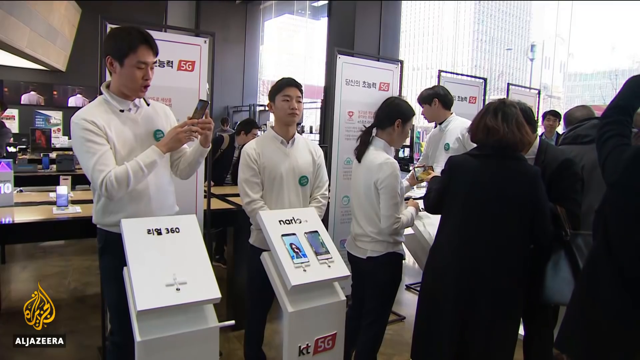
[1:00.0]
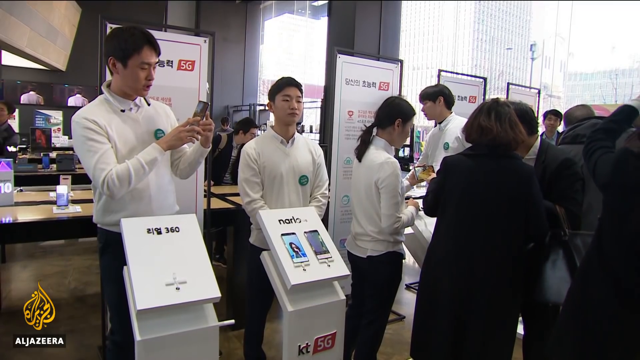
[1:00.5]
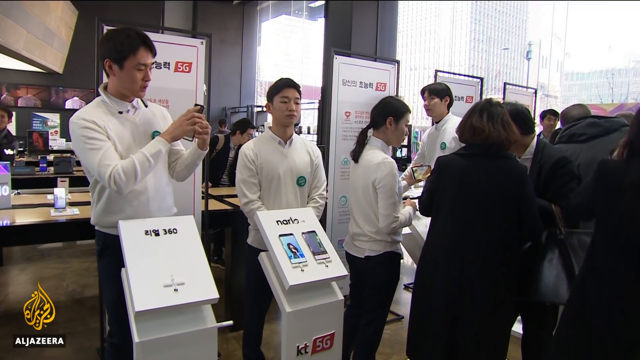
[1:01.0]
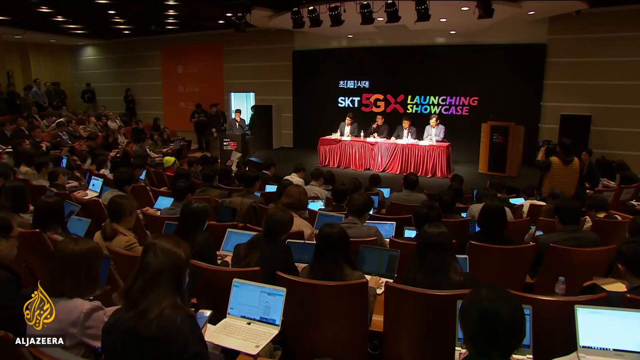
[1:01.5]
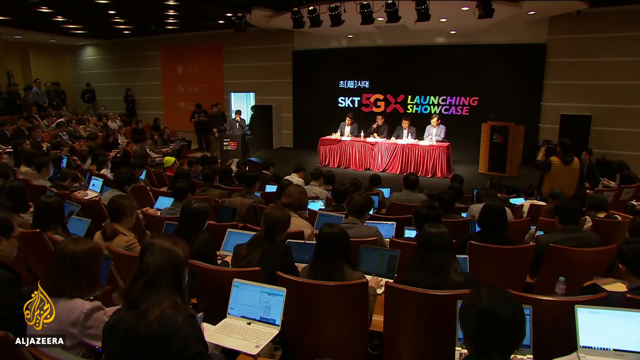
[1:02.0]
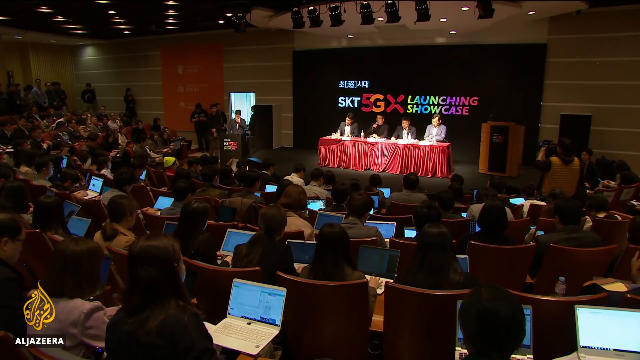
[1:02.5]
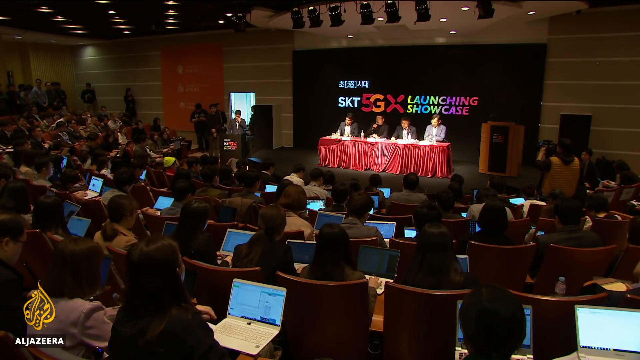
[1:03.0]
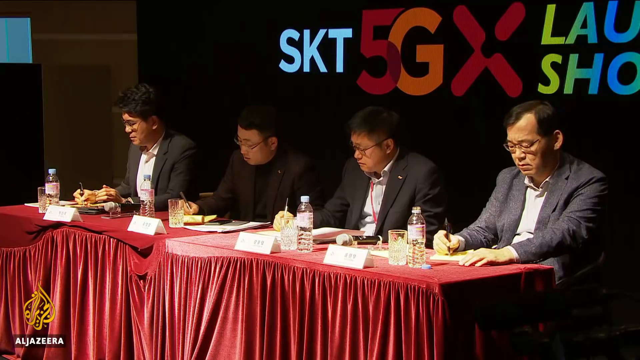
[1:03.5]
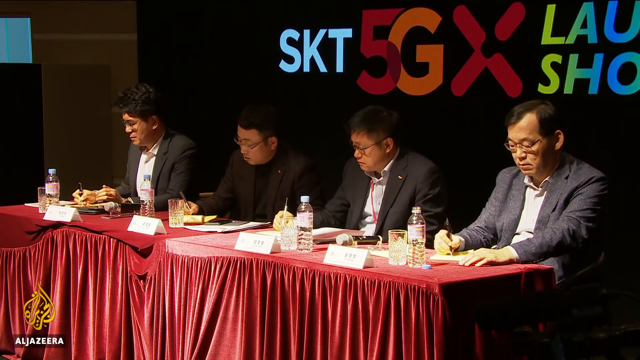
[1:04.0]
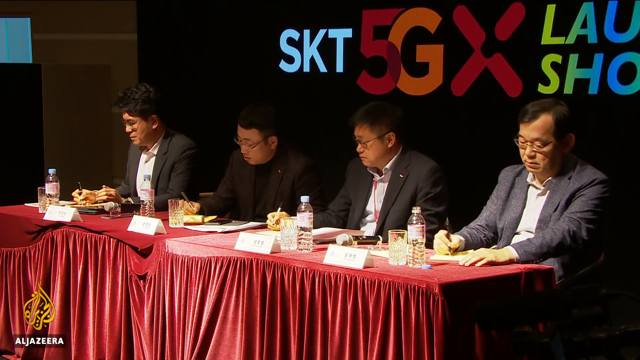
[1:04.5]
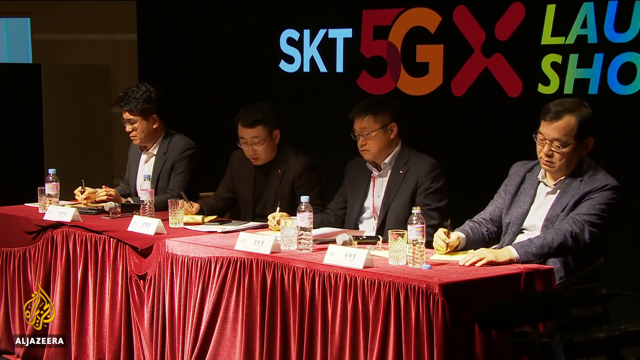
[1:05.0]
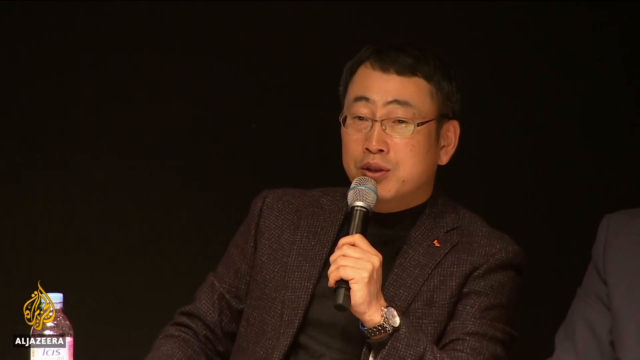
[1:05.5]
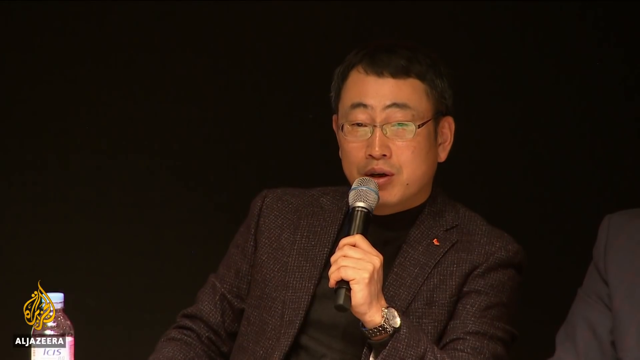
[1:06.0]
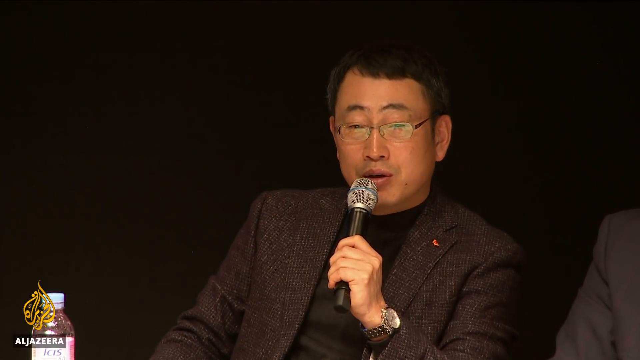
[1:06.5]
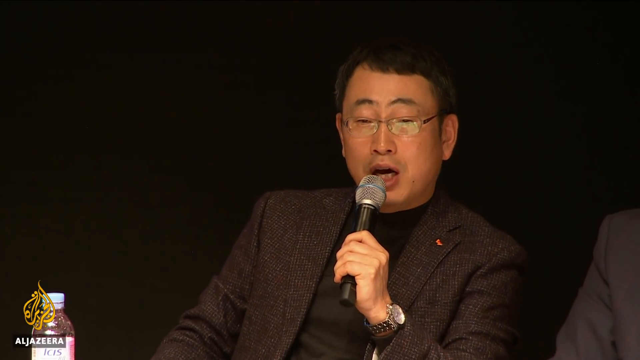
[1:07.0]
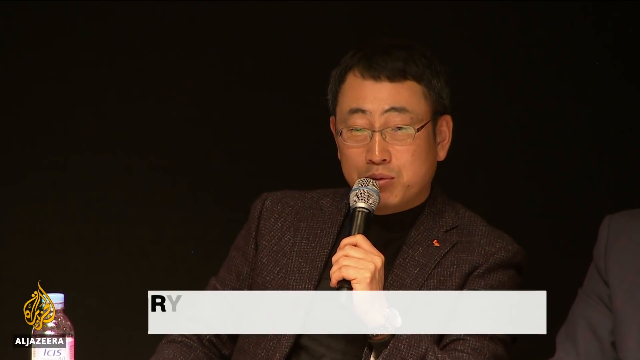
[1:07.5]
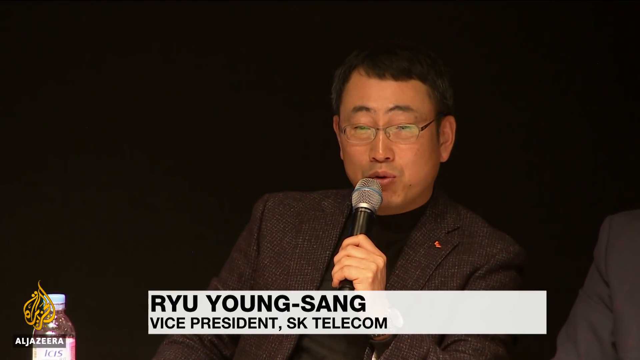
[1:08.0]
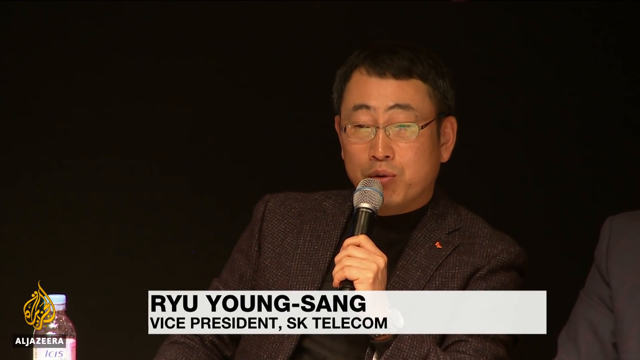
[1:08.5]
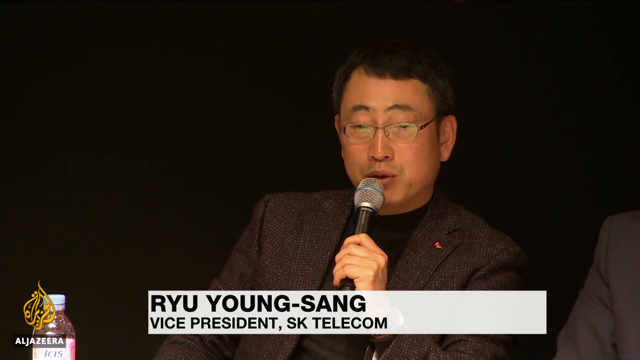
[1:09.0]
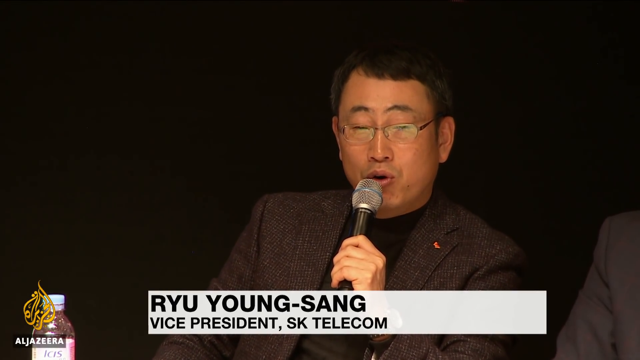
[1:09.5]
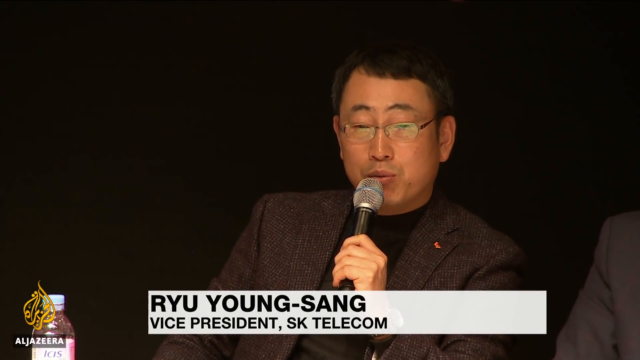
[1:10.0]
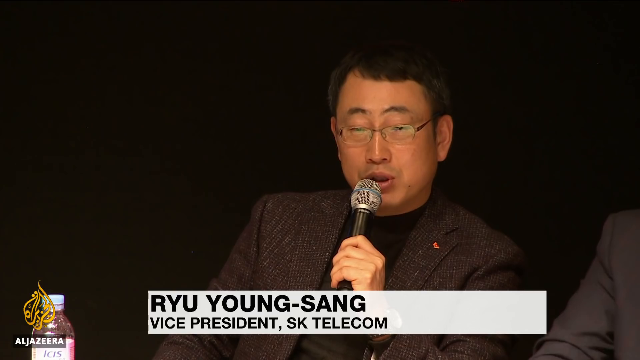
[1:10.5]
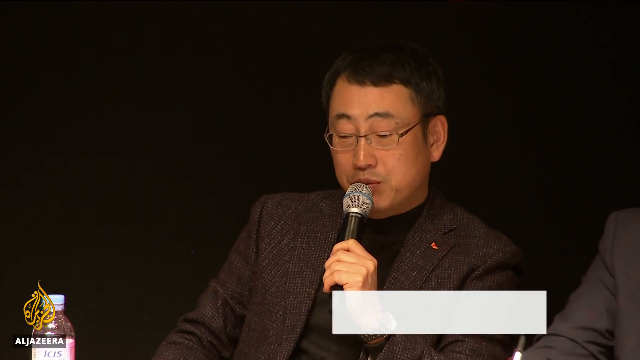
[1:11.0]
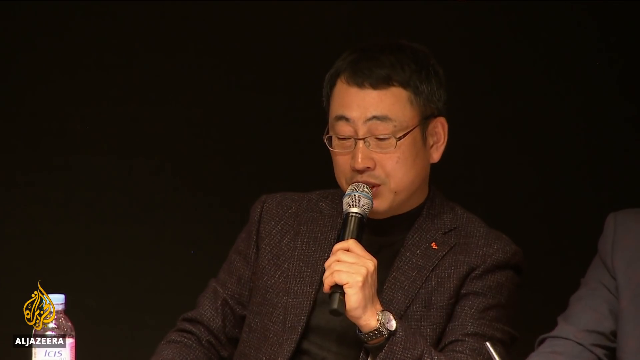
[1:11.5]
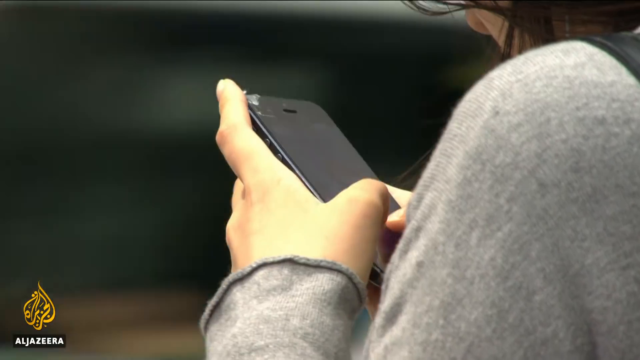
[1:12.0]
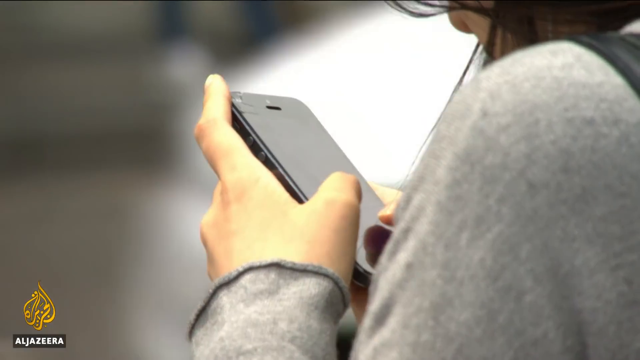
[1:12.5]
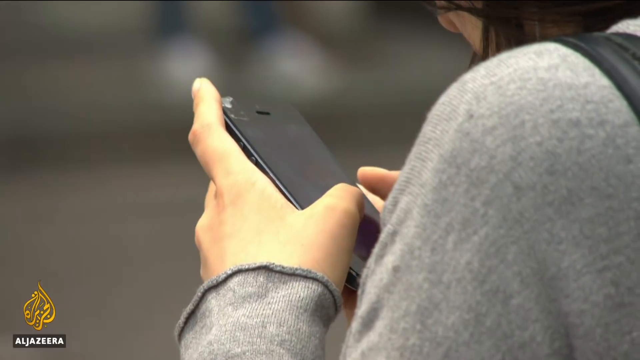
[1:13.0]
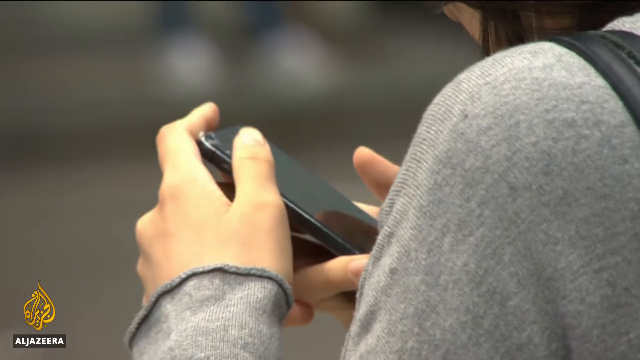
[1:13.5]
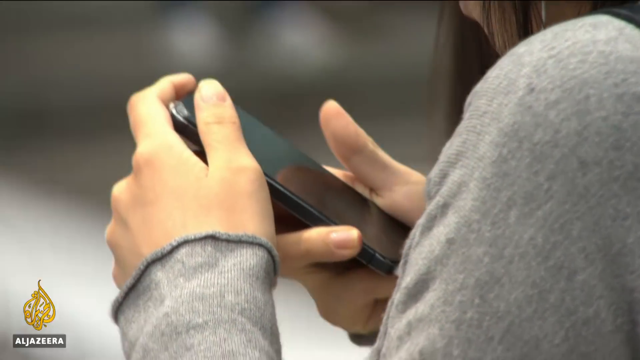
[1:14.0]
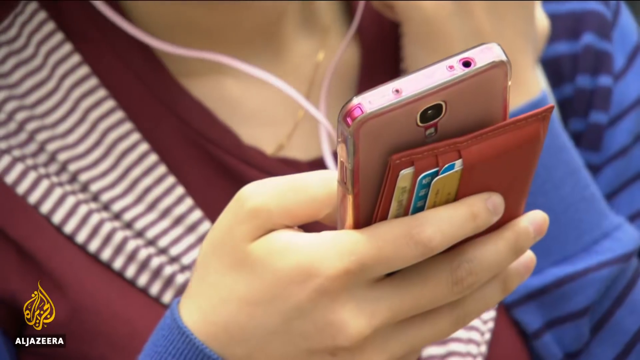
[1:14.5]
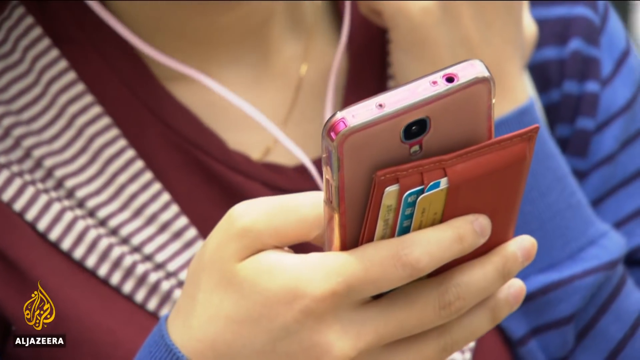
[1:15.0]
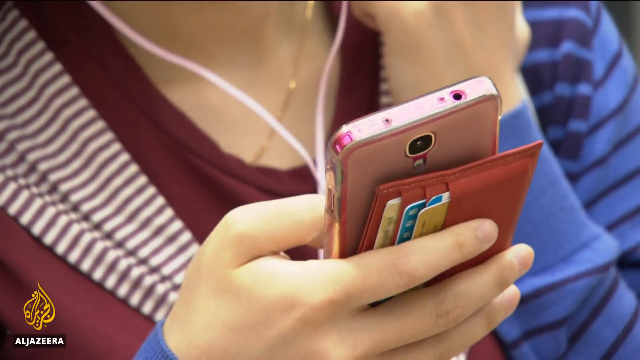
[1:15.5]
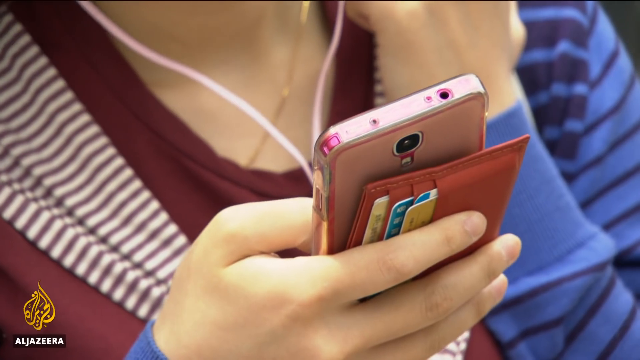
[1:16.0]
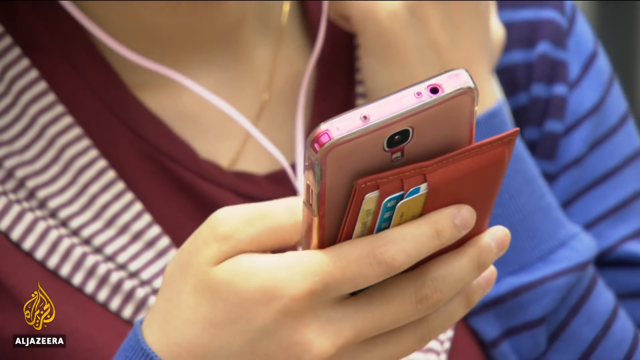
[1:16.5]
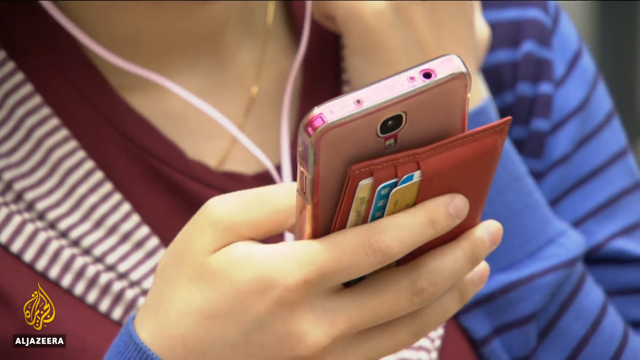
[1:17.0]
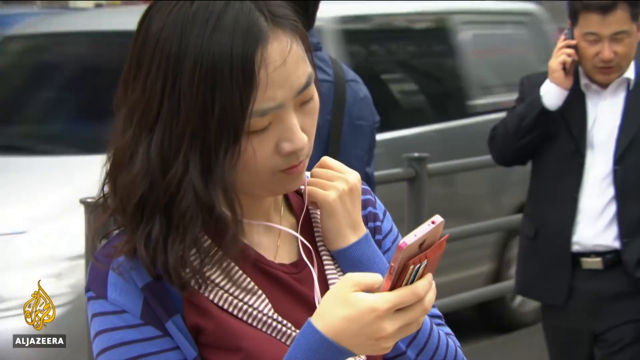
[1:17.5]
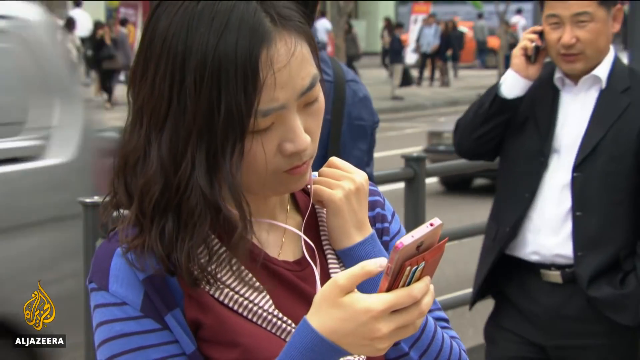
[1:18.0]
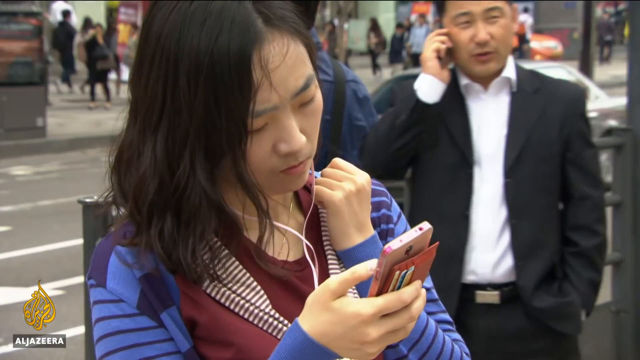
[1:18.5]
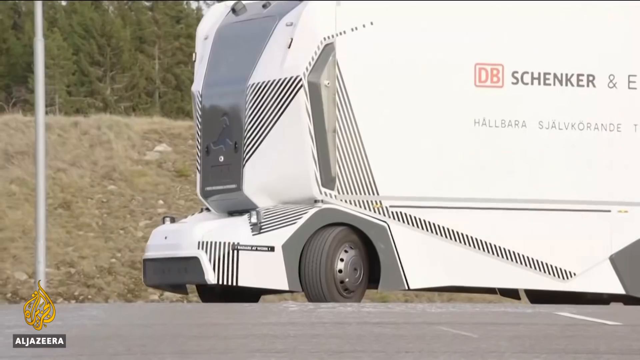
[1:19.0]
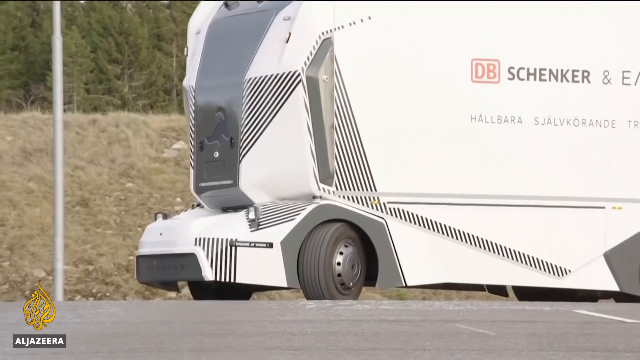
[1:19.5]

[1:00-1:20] A panel of four men sits at a long table with red tablecloths on a stage at a convention, with a large sign behind them that says "SKT 5GX Launching Showcase." They face an audience in what could be an auditorium, most of whom have open tablets in front of them. The camera closes in on the four panelists, all Asian, all wearing glasses, all with dark hair. Three wear gray suits and white shirts, and one wears a brown suit and black shirt. All of them are writing on paper and sit with water bottles and white folded paper name tags in front of them. The camera closes in further on the man in the brown suit and black shirt, who speaks into a microphone; he is Ryu Young Sang, vice president of SK Telecom. The video cuts outdoors to a close-up of a person in a long-sleeved gray sweater tapping quickly on the screen of a black cell phone as a car drives by in the background. Another close-up shows someone using a pink phone with a red phone case holding little credit cards. The phone appears to be held by someone younger wearing colorful blue, red and white stripes, with pink earbuds attached to the phone going up to the neck; only the upper torso is visible. The camera pans out a little to reveal a young Asian woman holding the phone as she stands on the corner of a busy street. Next, a very large white panel truck makes a left-hand turn in a wide open space. The truck says "D.B. Schenker" and "E7NR," along with other text in another language that is hard to read.